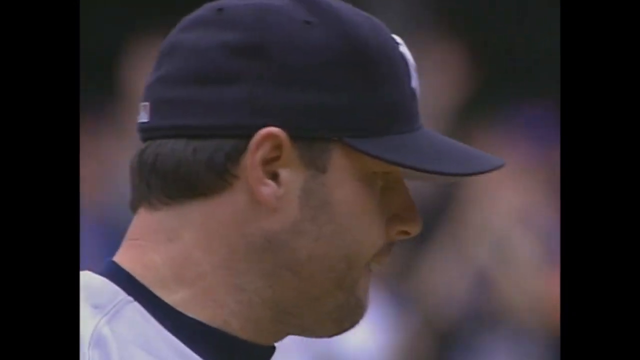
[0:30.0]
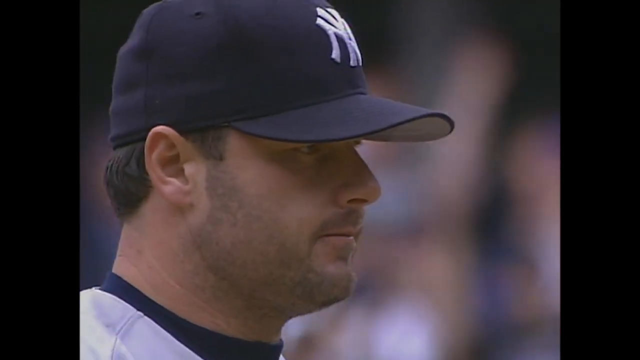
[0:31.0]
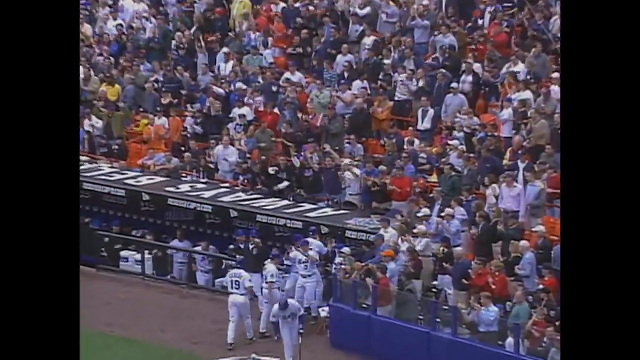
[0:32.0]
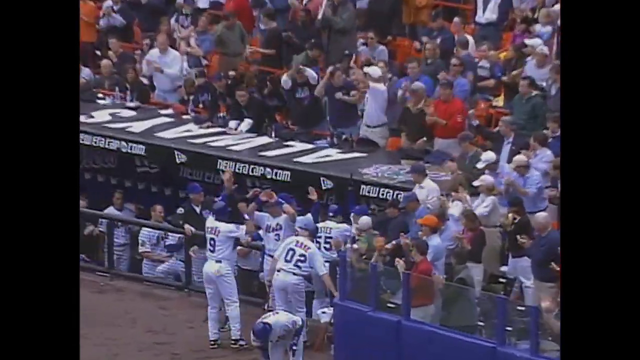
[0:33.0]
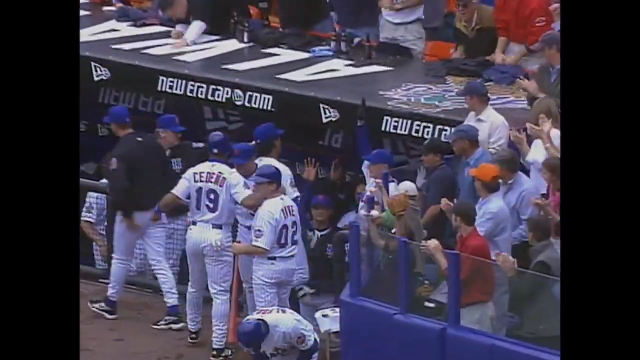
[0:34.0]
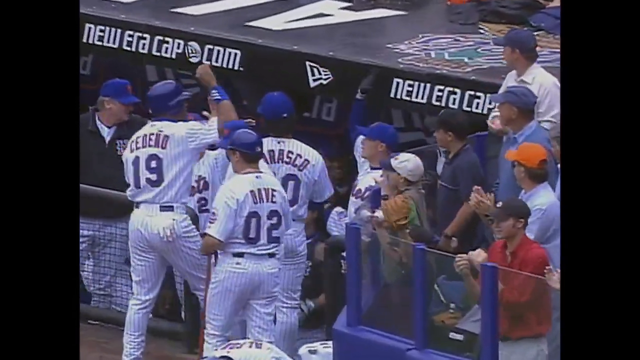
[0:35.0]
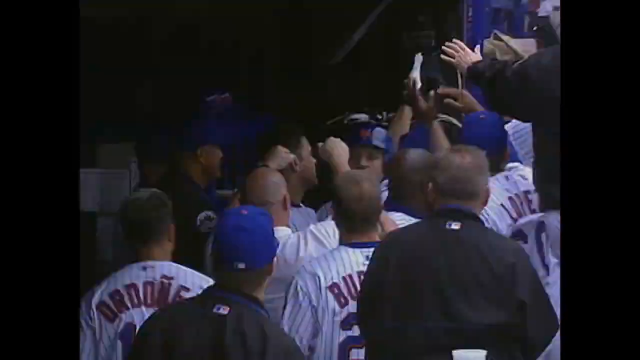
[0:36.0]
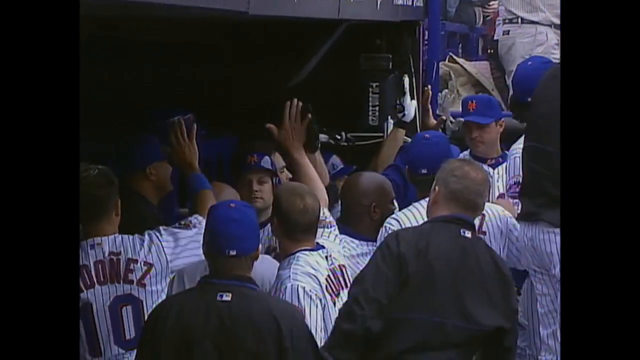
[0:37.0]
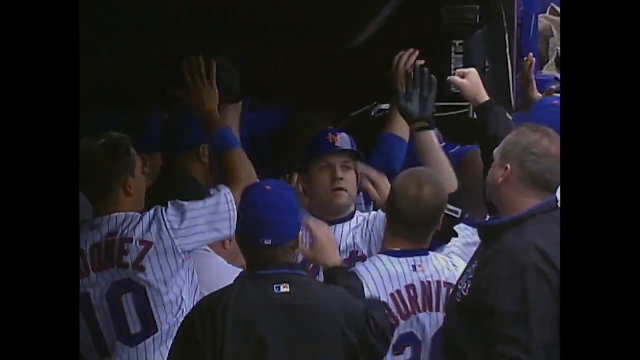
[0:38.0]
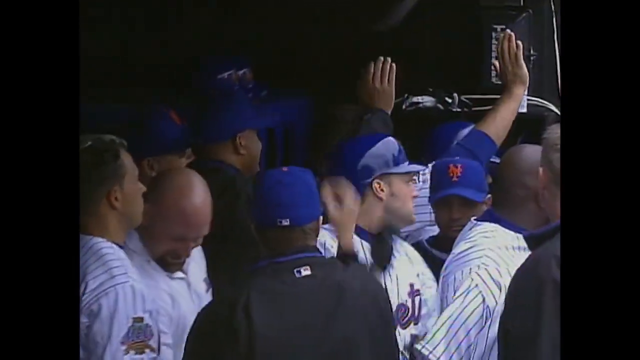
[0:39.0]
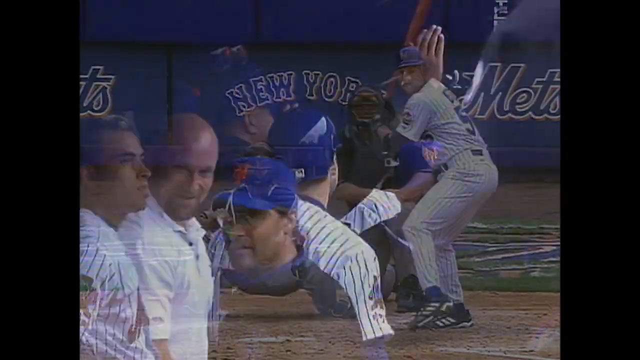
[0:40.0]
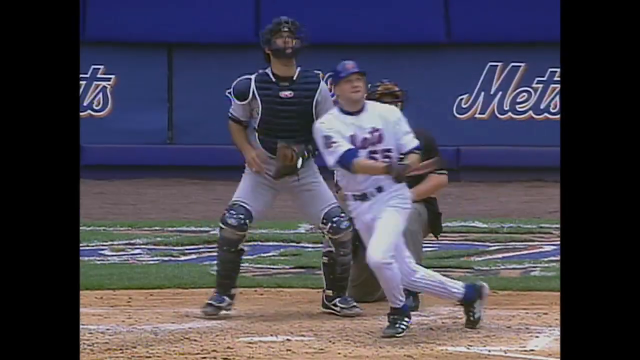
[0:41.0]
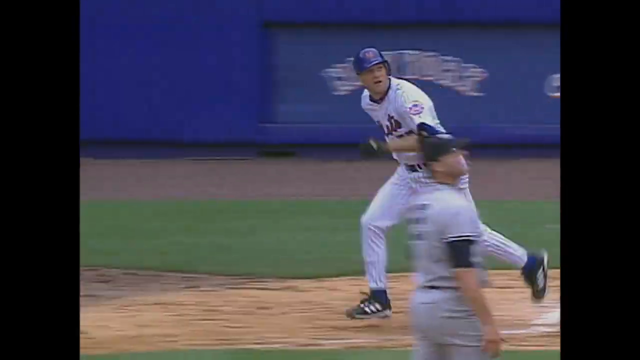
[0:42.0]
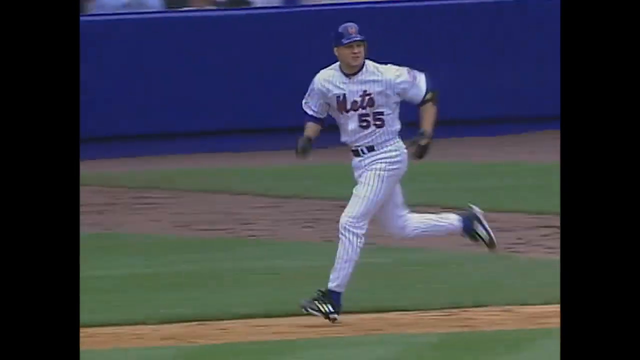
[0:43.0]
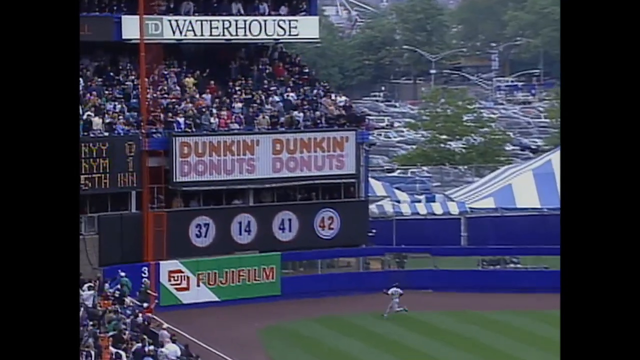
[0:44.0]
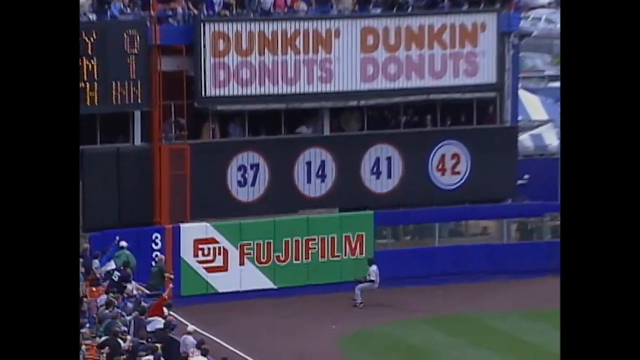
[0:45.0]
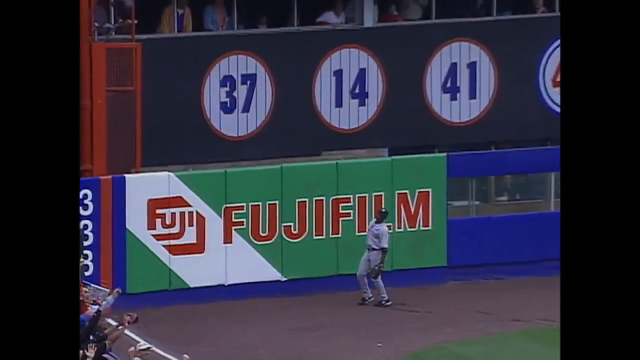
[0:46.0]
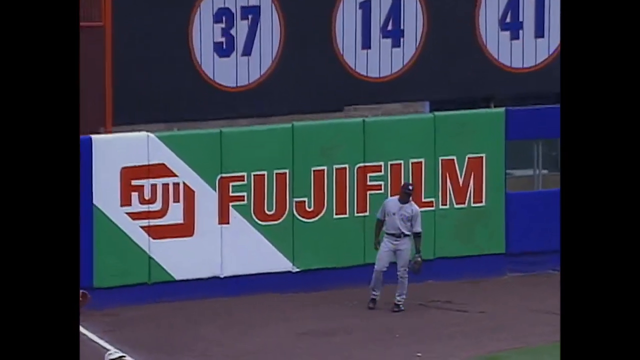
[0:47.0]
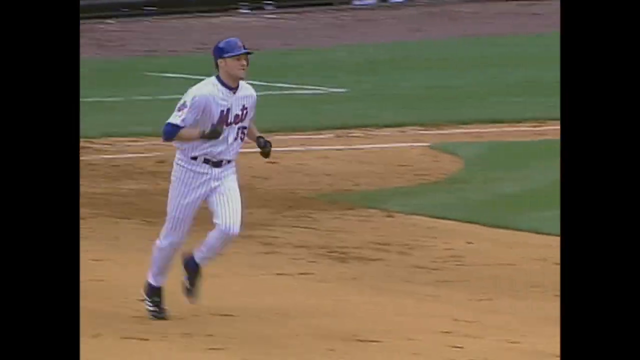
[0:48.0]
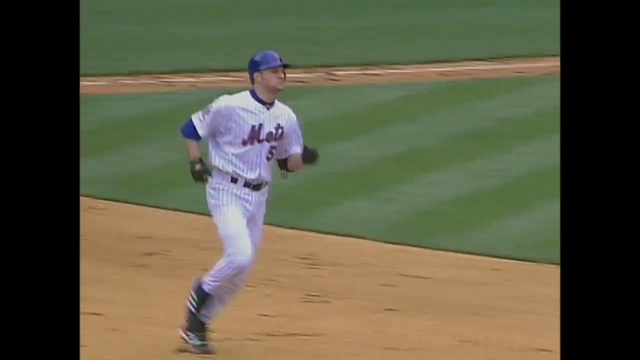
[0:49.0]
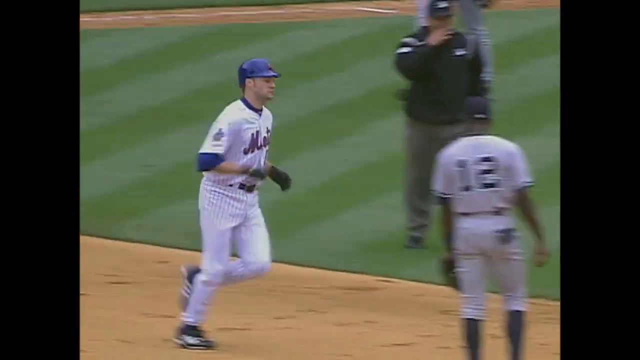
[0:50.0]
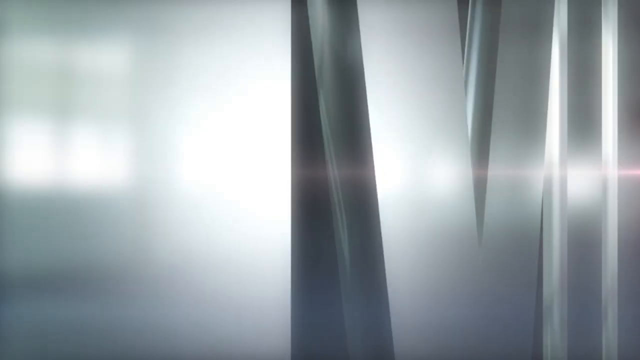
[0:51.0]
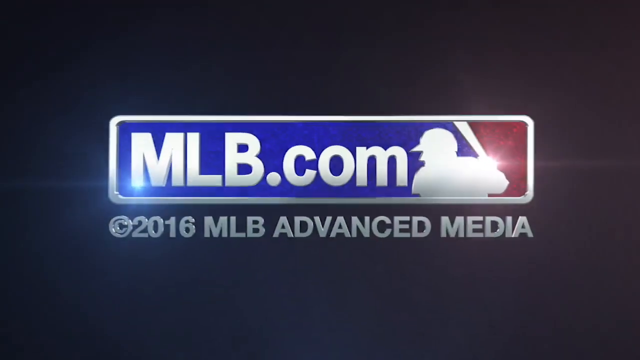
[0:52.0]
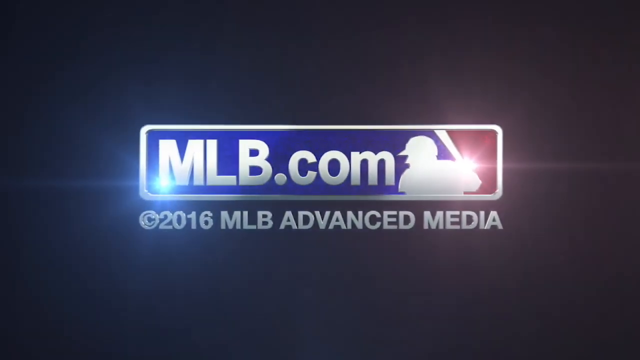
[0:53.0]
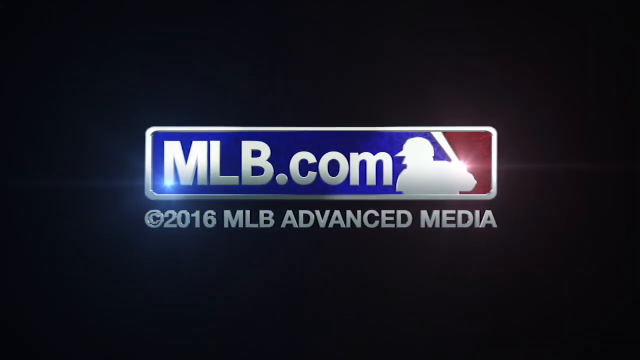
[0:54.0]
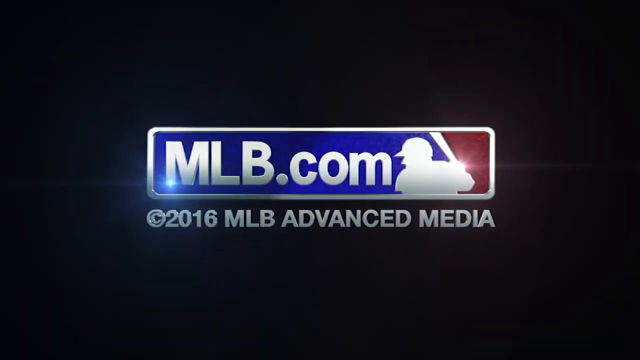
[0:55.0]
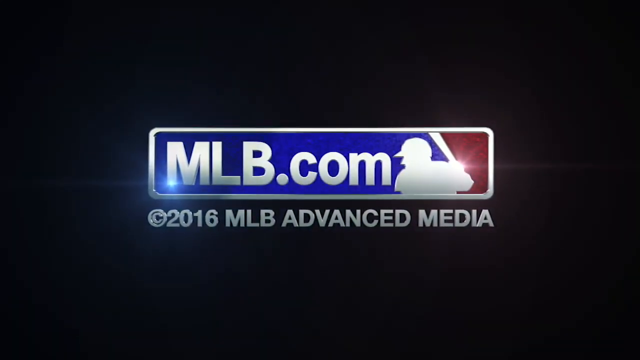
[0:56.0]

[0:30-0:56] The Yankees pitcher, wearing a blue hat, purses his lips as he looks forward. A wide view of the Mets dugout shows the players celebrating, high-fiving and hugging each other as a crowd behind them claps and cheers. The camera zooms in closer, showing the players giving high fives to everyone on the team. In the dugout, the player who hit the home run walks through the crowd of players, who all have their hands raised, slapping hands and hitting him on the head to celebrate. A replay then shows the batter swinging and making contact with the ball at chest level. He steps out of the plate and runs forward, his head turning to the left to watch the ball flying in the air, and jogs at a medium pace toward first base, still looking at the ball. The camera transitions to the outfield, where the left fielder runs toward the wall with his head up, looking for the ball. He slows as he nears the fence, and the ball lands just over the top of the fence for a home run. The player turns back toward the infield and lowers his head in a defeated motion. The batter is then shown jogging around home plate at a slow speed. A graphic pops up reading "MLB.com 2016 MLB Advanced Media".